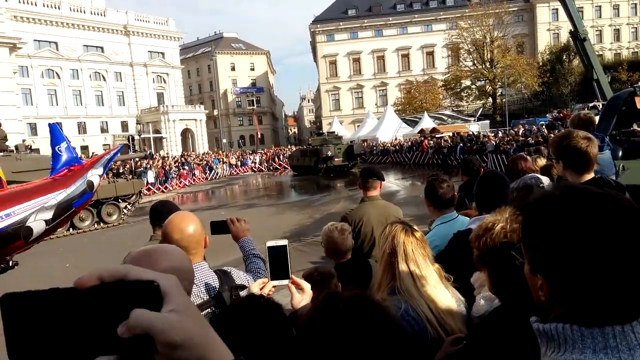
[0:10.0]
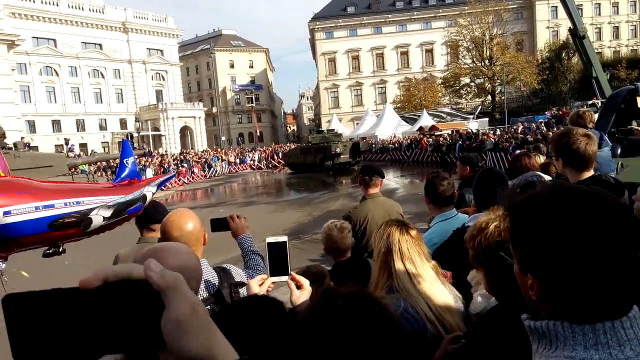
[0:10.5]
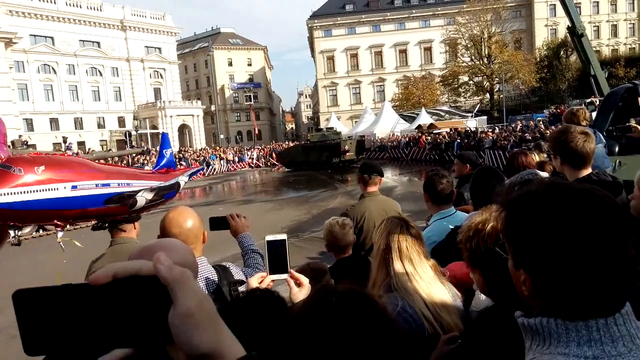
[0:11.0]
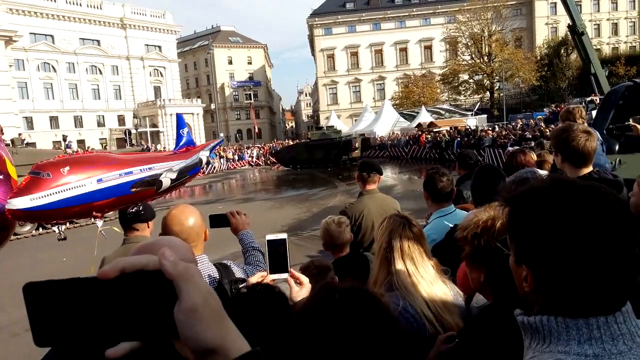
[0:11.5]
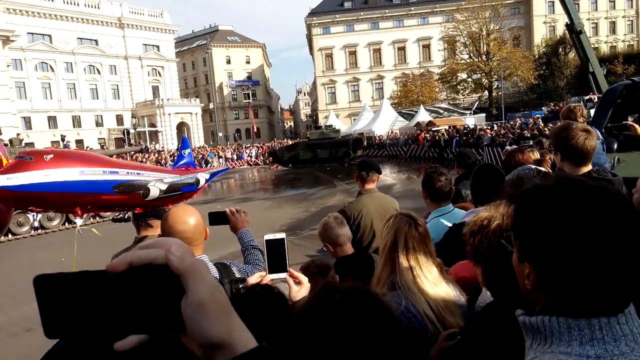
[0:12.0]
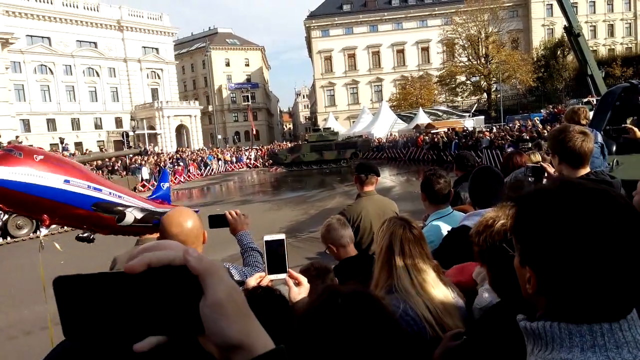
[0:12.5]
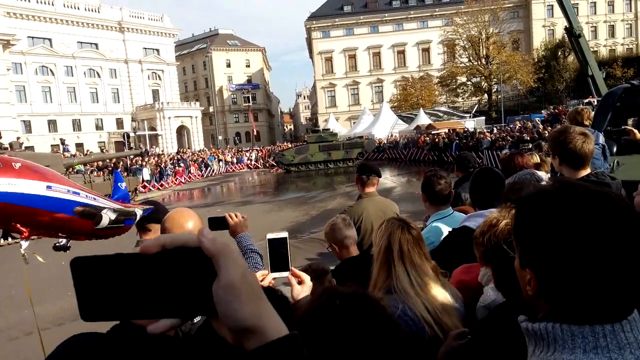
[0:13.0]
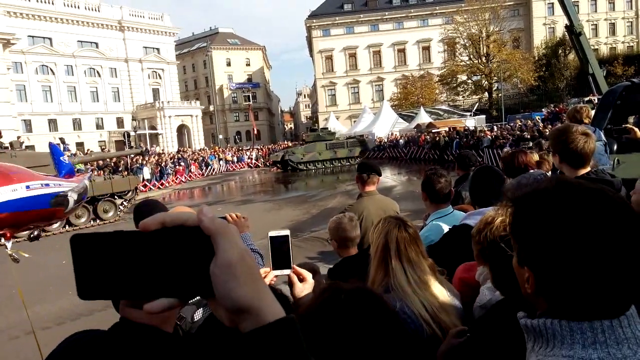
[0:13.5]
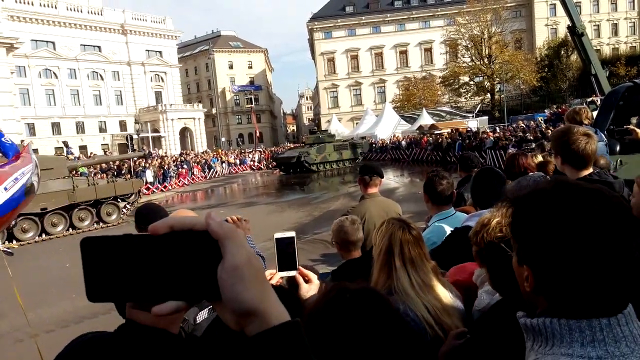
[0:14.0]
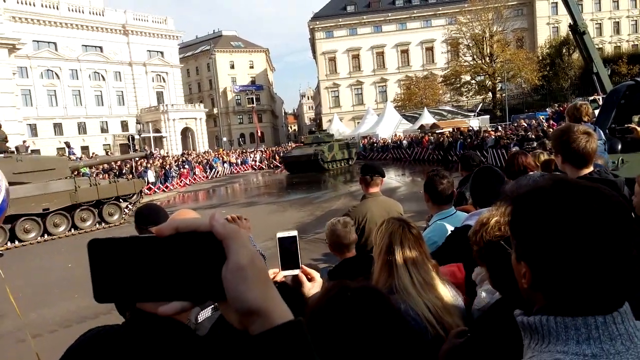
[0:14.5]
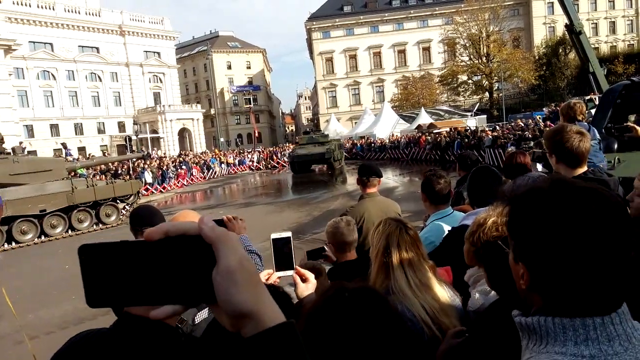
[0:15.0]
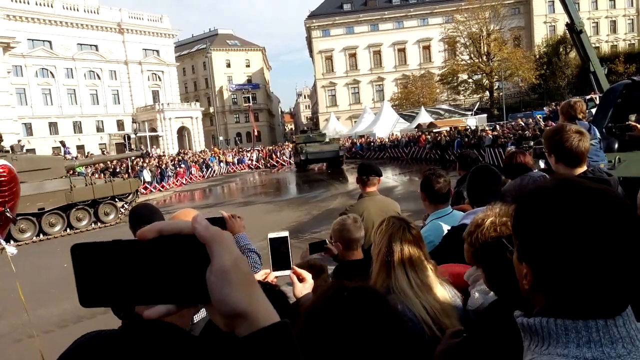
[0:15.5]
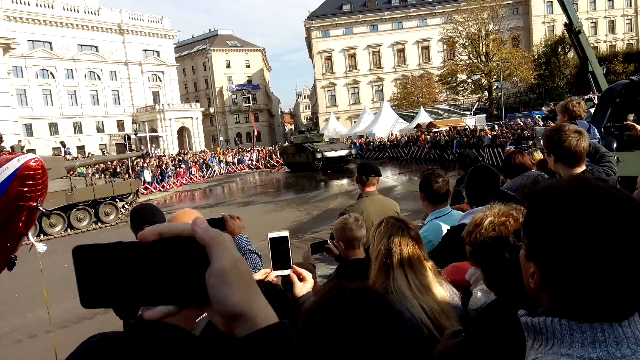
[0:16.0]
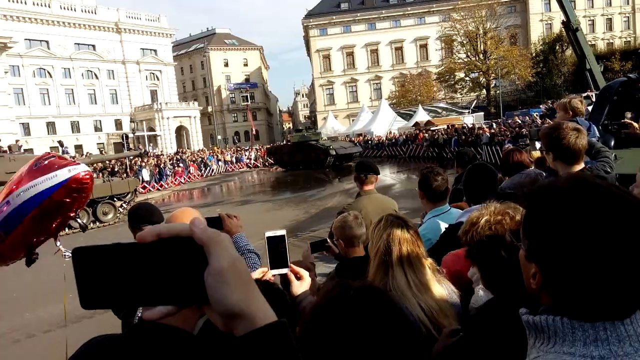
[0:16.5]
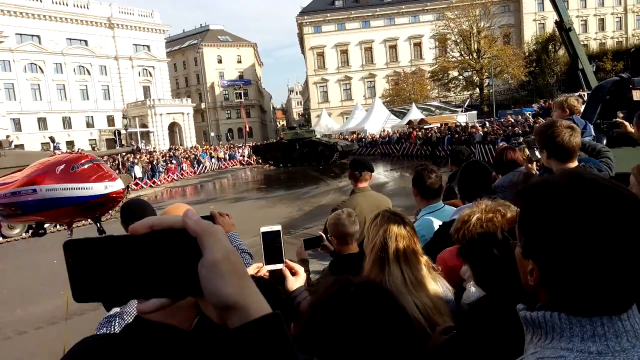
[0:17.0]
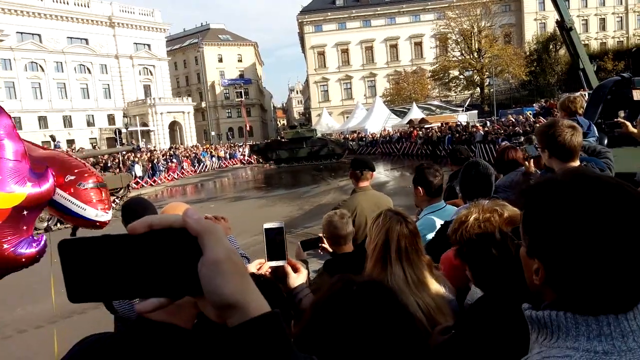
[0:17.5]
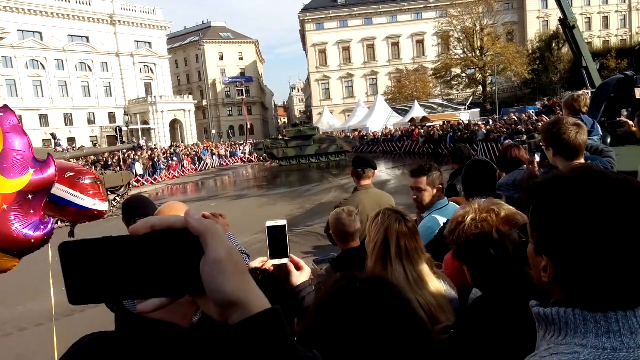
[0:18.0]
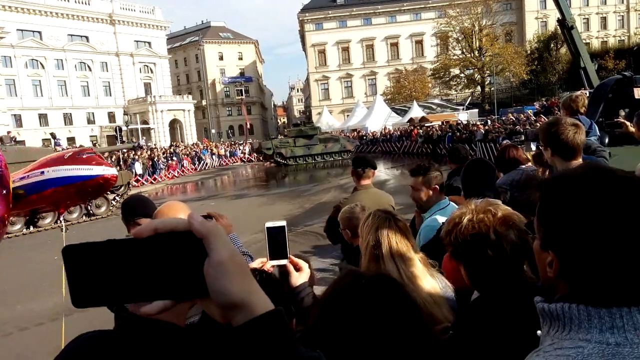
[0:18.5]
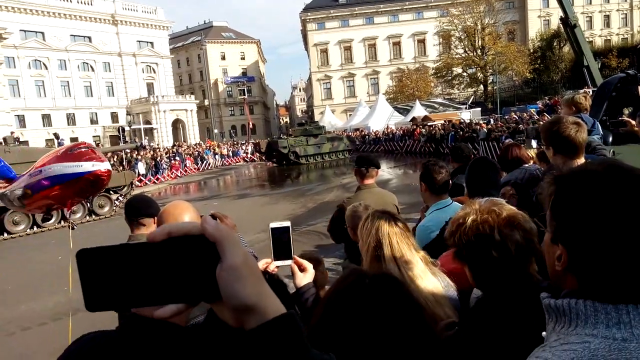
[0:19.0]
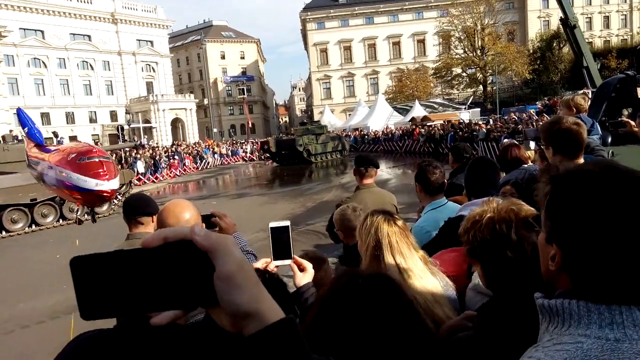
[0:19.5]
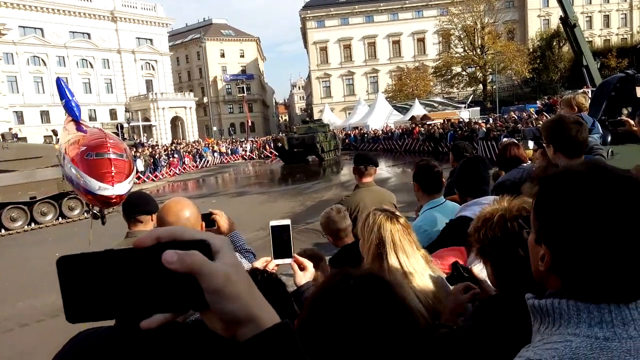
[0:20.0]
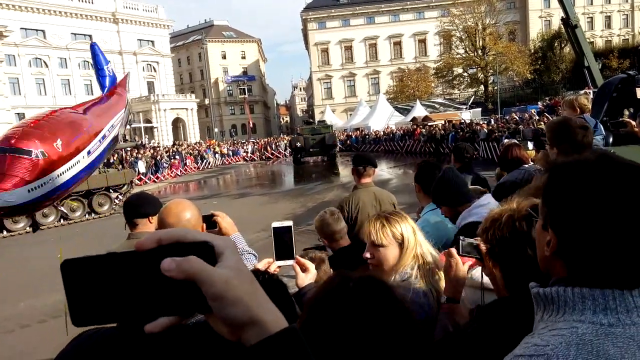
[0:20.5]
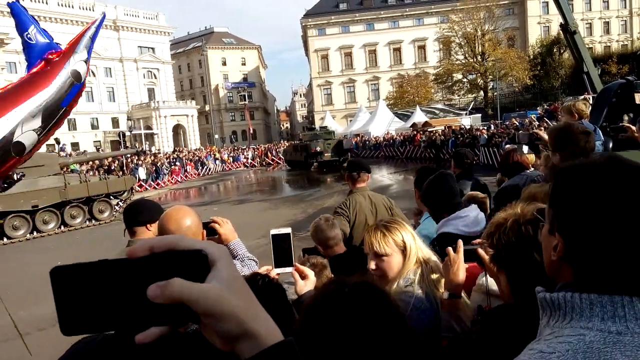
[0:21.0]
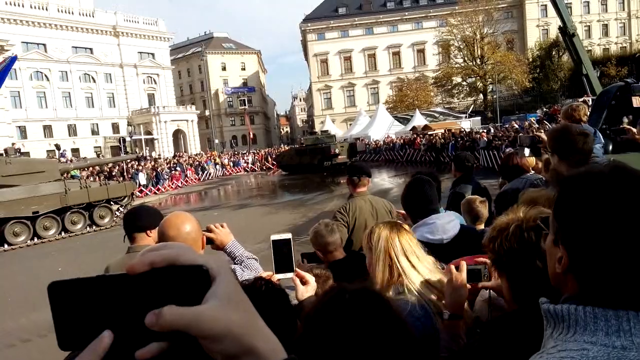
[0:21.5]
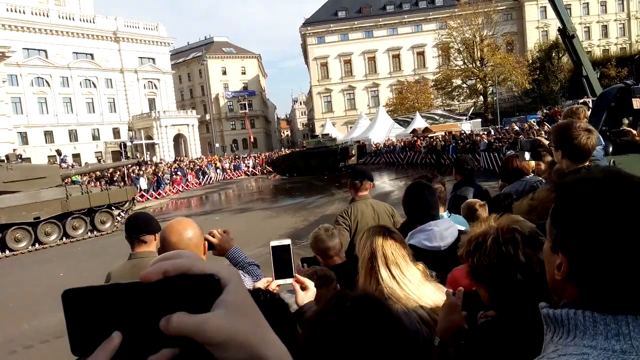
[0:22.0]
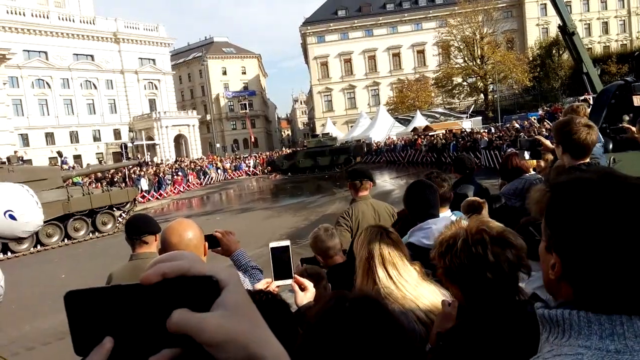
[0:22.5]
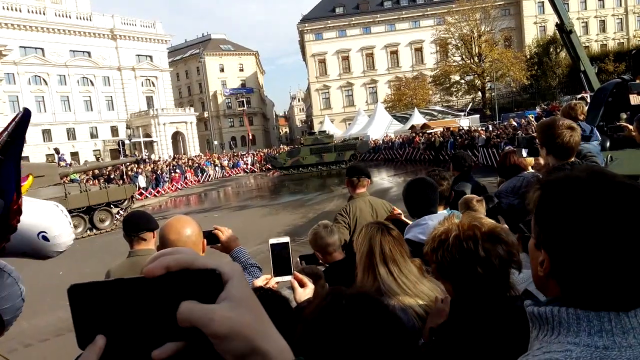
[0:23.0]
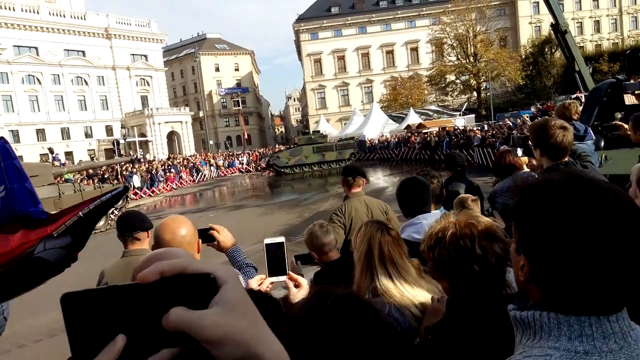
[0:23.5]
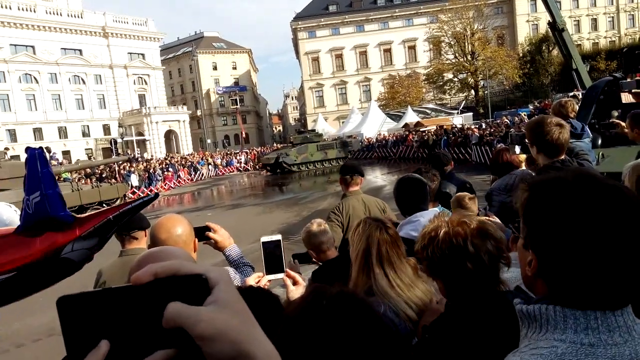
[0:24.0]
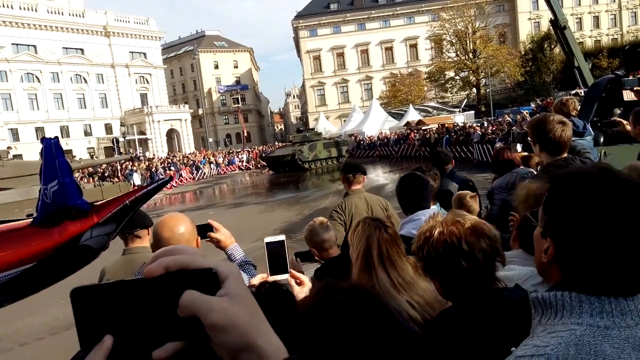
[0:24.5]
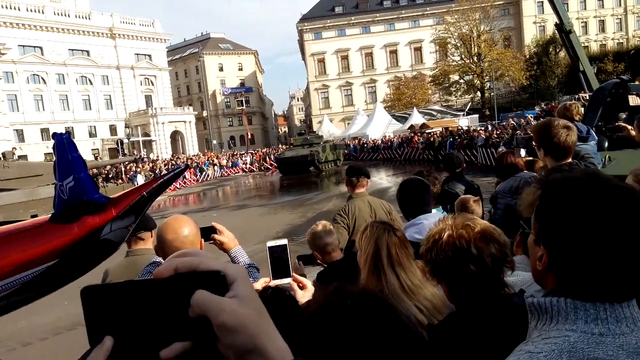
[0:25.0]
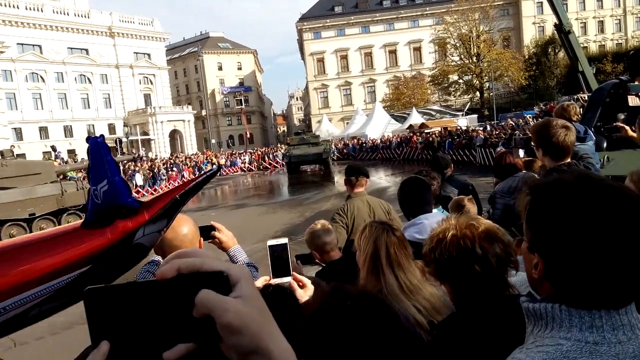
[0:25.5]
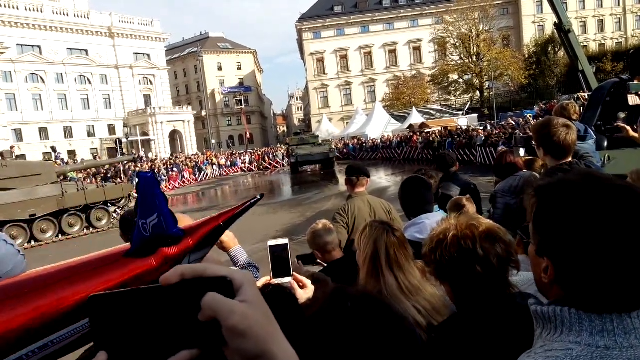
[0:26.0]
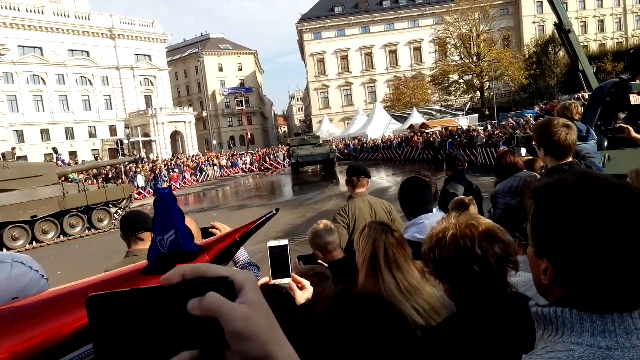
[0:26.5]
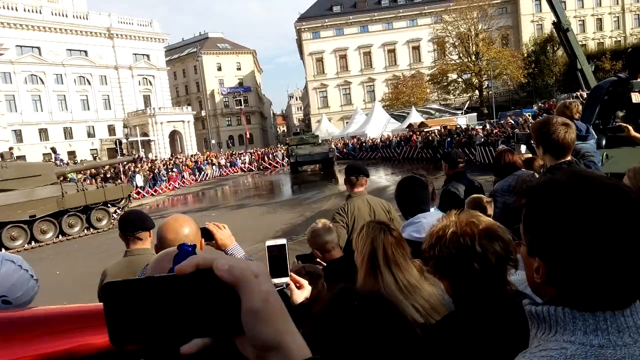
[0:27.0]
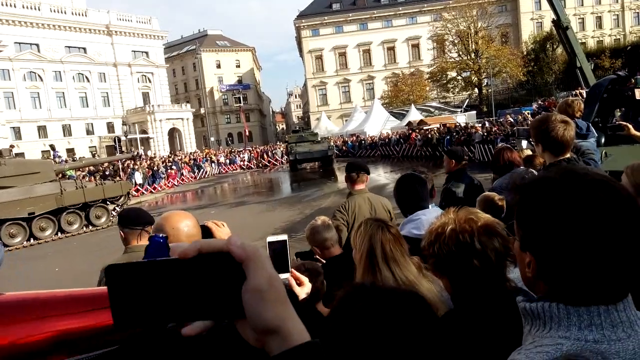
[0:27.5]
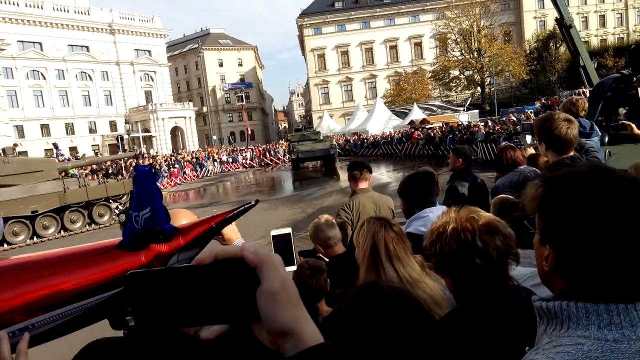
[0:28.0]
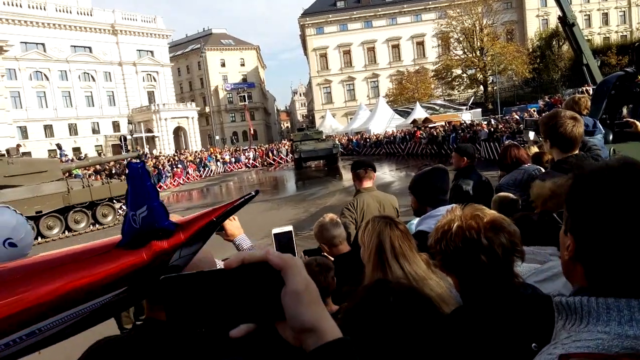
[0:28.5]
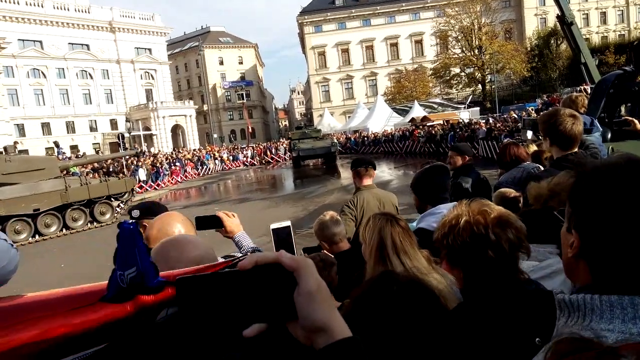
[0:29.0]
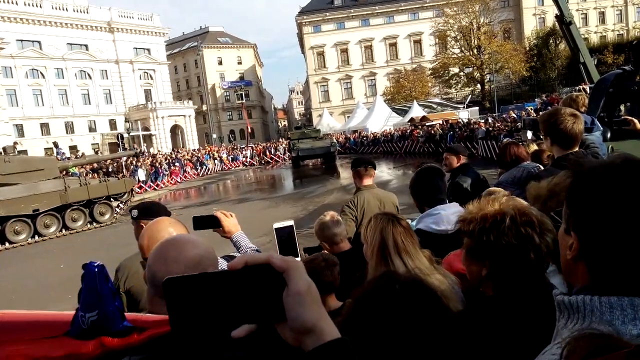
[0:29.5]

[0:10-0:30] The second tank, which has moved towards the end of the parade area, spins round and round in the same place. The ground it is moving on appears to be wet, though whether this is water or some other substance is unclear. The tank draws a lot of interest from the crowd, and several people are filming on their phones. A soldier stands at the front of this group of people, perhaps there to help keep order. From this slightly different angle, more white marquees are visible at the end of the parade ground. In the top right corner is a long vertical arm of some unidentifiable machinery. The aircraft balloon keeps bobbing around, and there is another balloon as well that is difficult to identify.